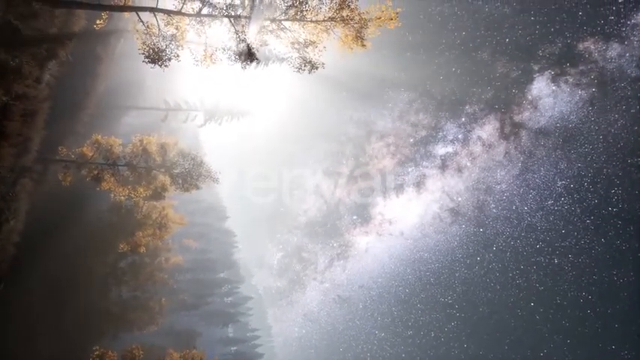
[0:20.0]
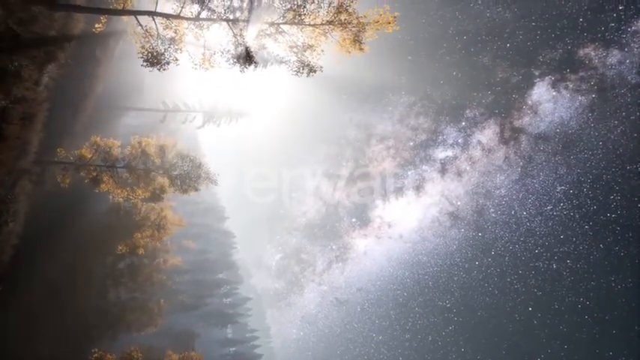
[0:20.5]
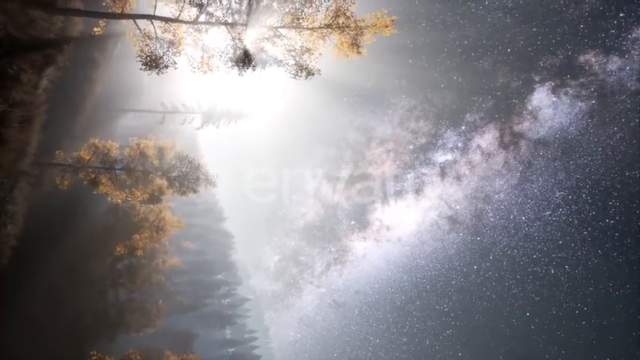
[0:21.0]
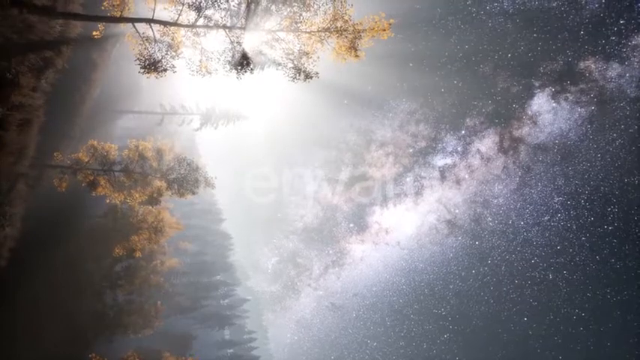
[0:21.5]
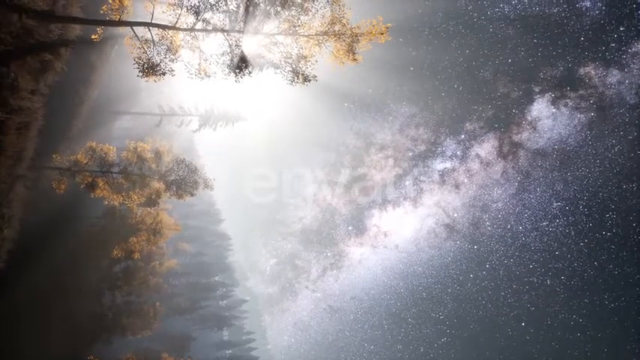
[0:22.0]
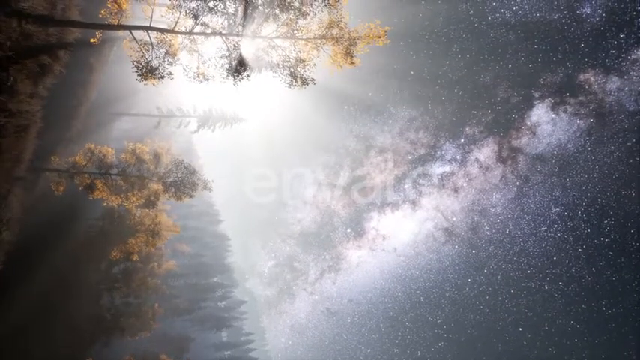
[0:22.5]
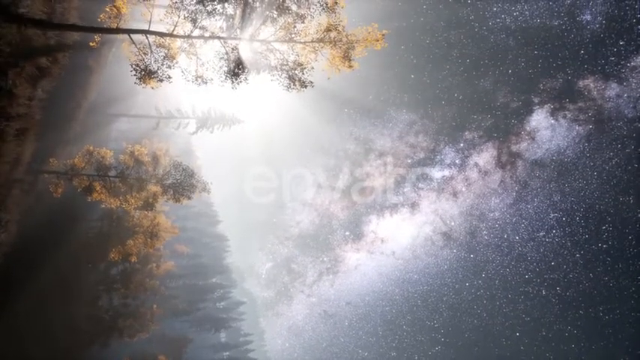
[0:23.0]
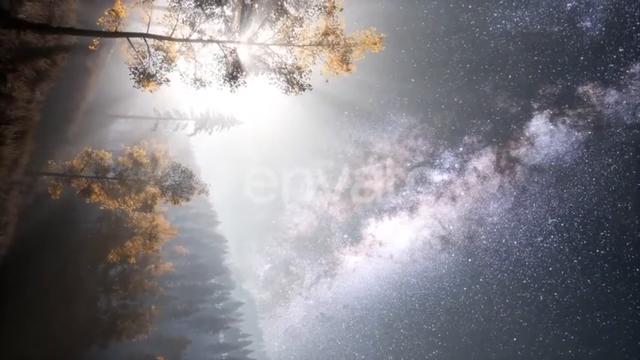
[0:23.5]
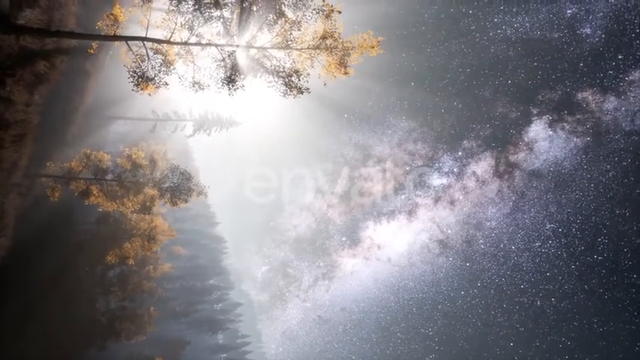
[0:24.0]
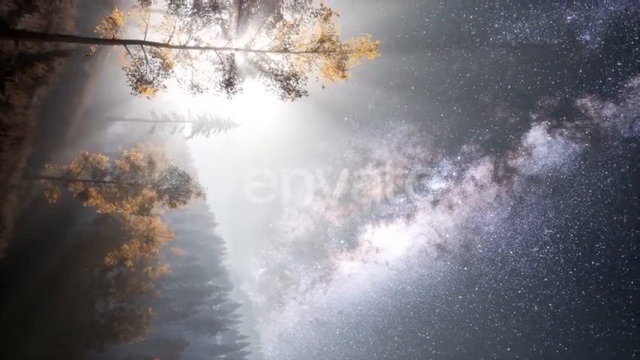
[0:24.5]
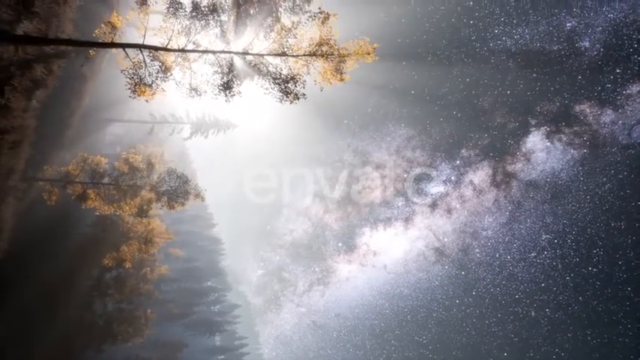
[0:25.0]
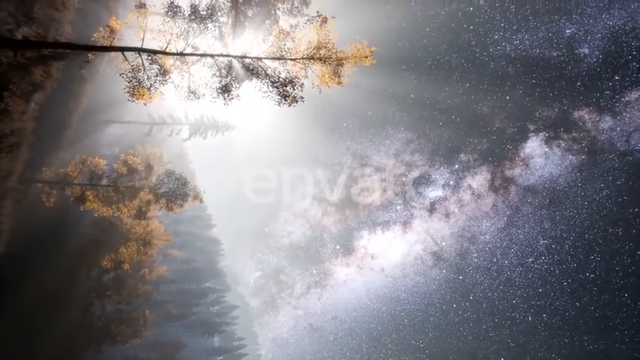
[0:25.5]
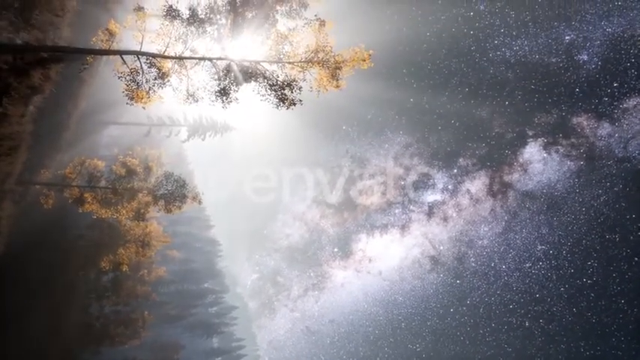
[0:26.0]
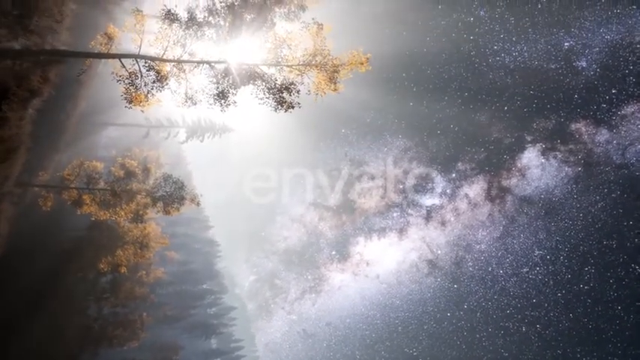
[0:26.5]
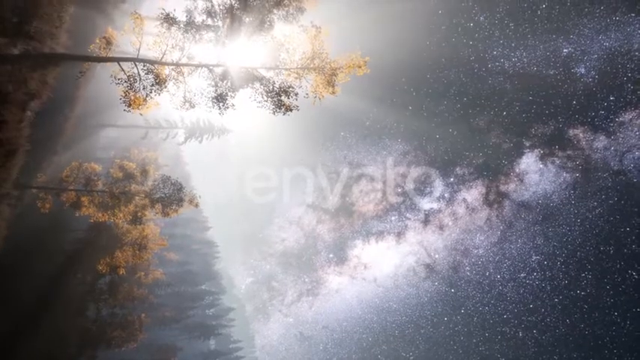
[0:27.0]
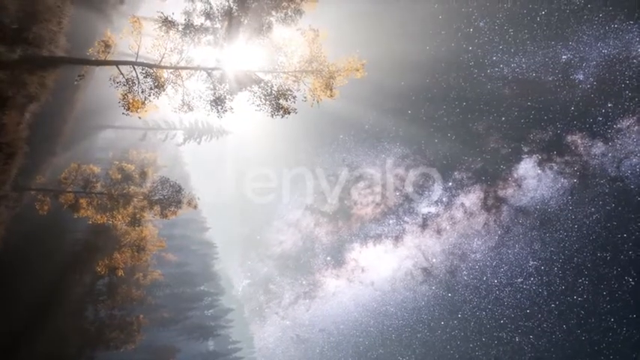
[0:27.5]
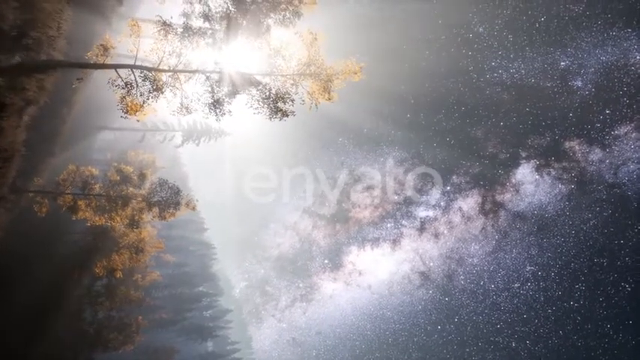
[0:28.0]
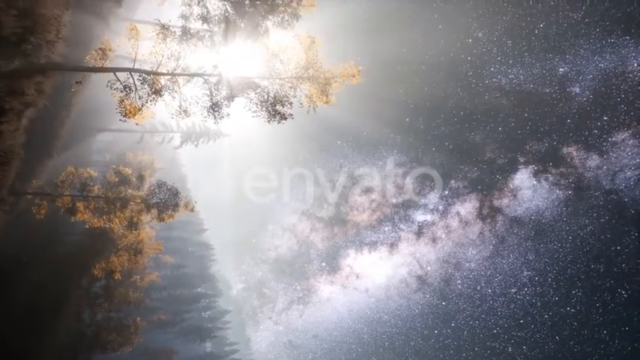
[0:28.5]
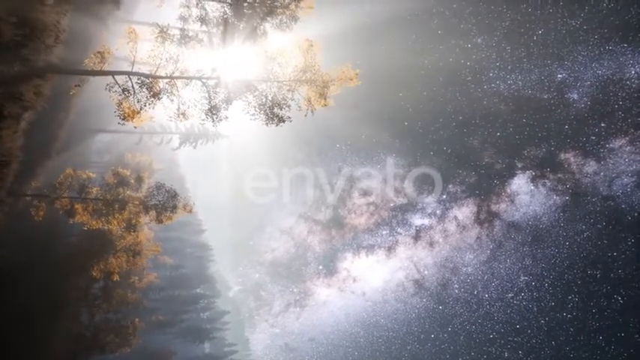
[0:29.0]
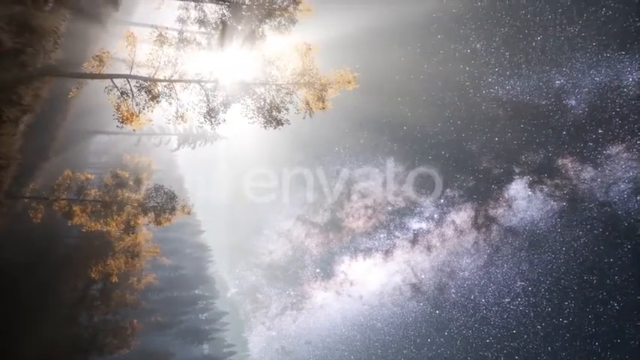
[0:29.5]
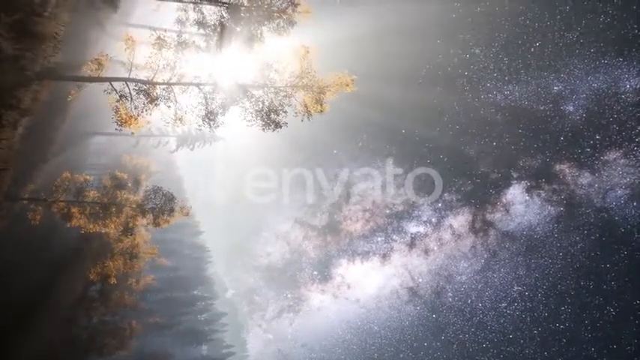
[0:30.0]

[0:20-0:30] More branches with greenery are visible on the left-hand side, apparently belonging to a tree, and a very bright light is just left of center. The right-hand side looks like it may be a view out into space, with a purplish hue. The camera pans up, and the right-hand side looks more and more like stars in the sky, possibly part of the Milky Way galaxy. It is unclear whether this is a digital effect.